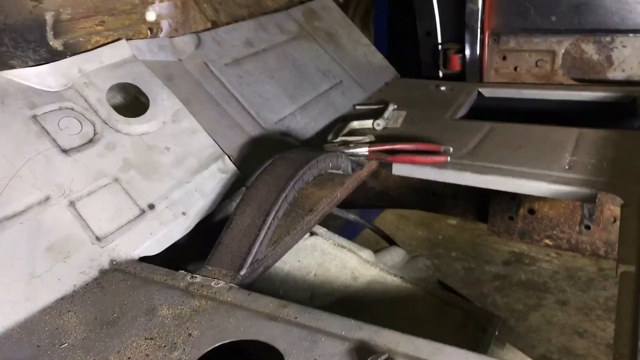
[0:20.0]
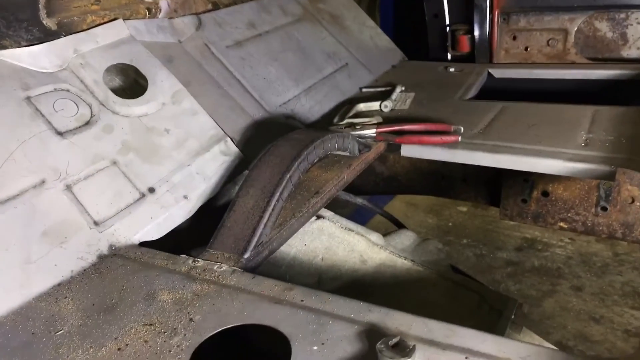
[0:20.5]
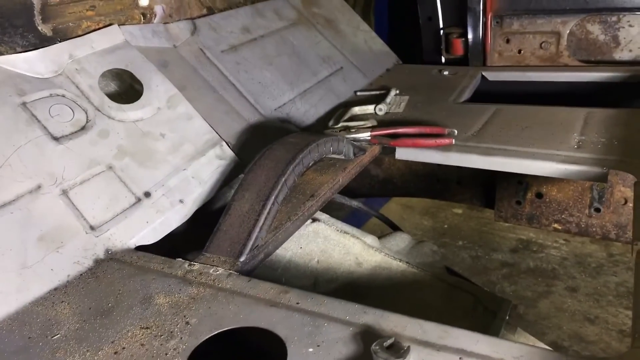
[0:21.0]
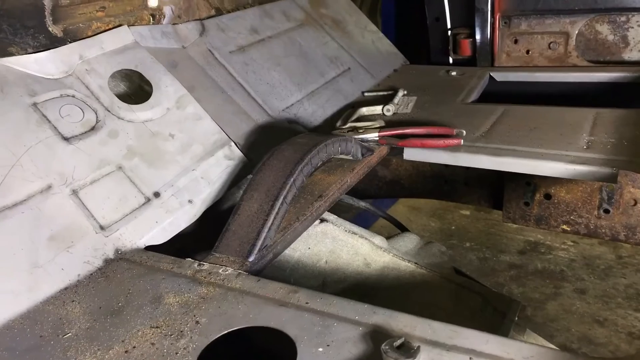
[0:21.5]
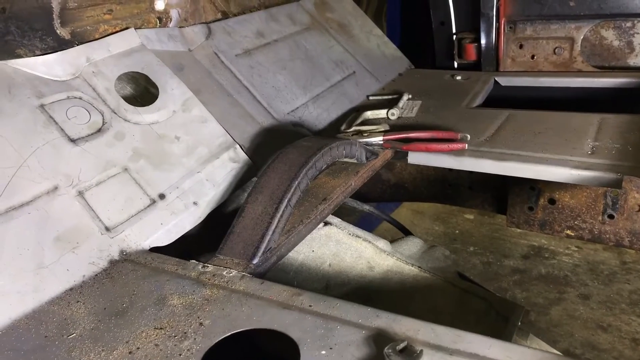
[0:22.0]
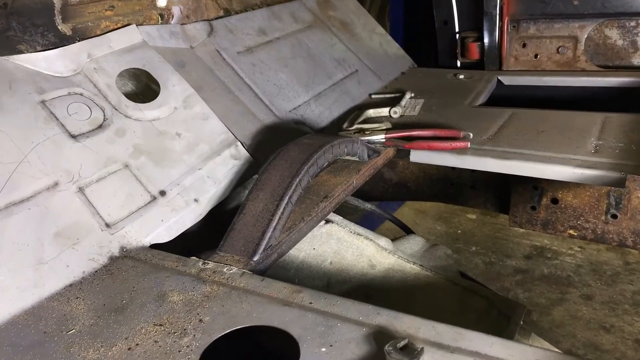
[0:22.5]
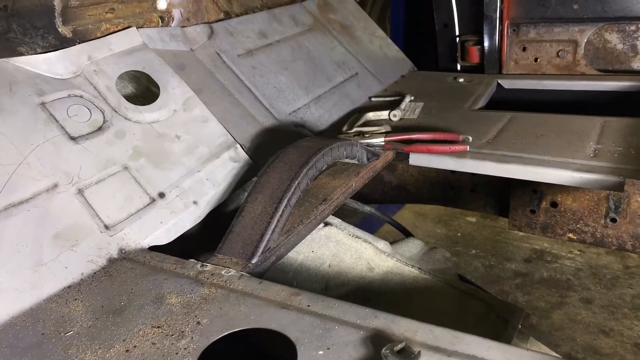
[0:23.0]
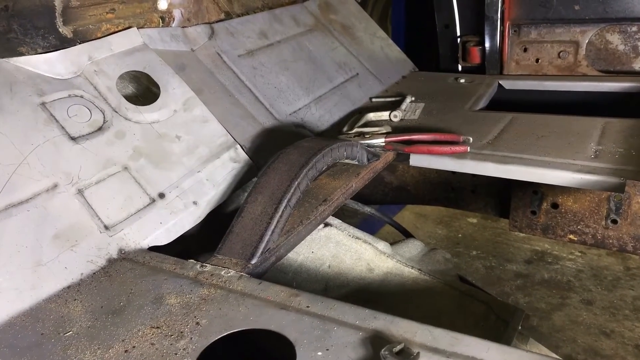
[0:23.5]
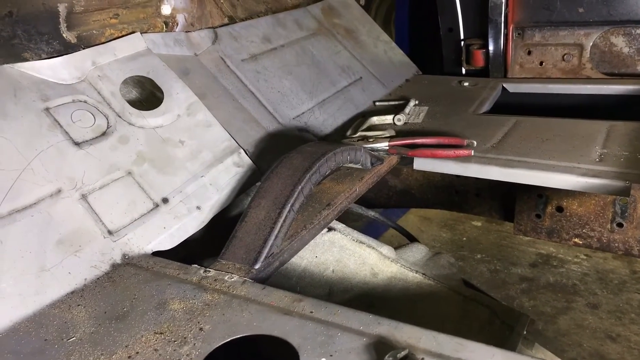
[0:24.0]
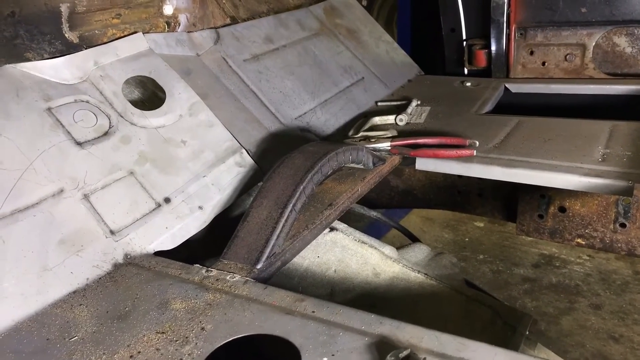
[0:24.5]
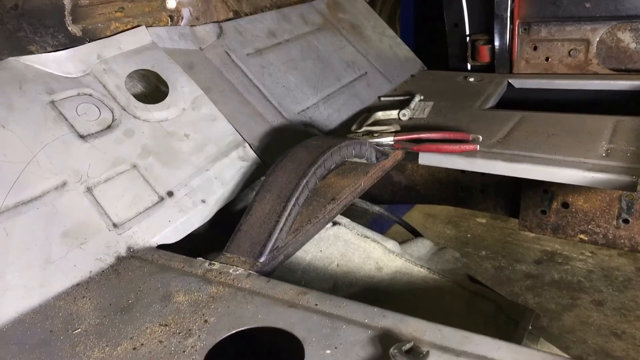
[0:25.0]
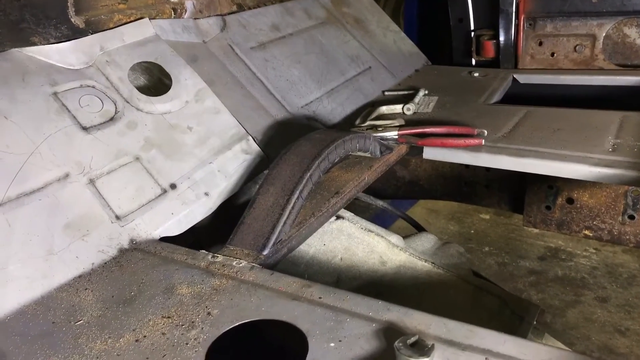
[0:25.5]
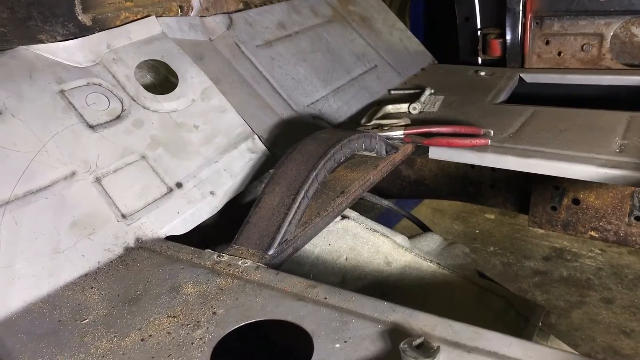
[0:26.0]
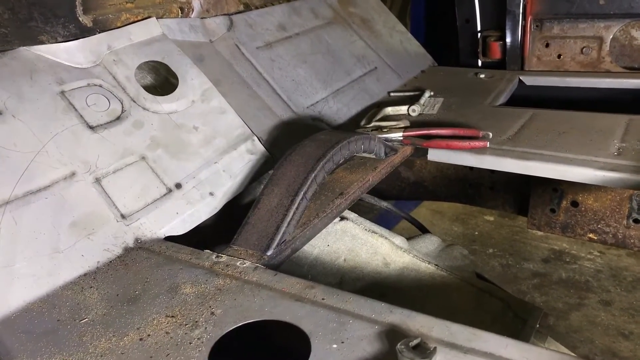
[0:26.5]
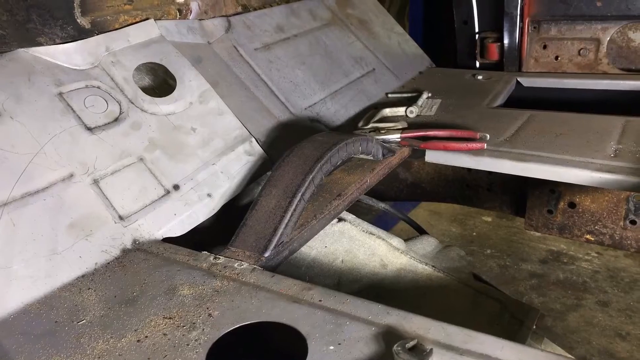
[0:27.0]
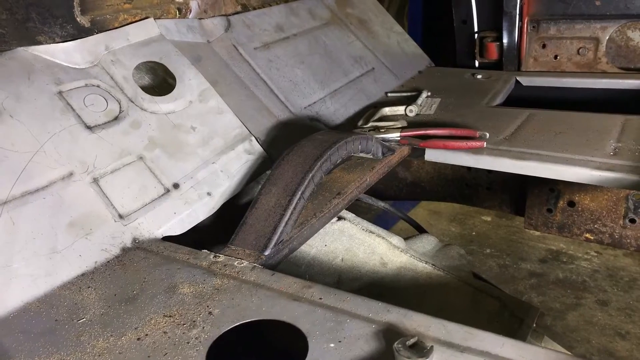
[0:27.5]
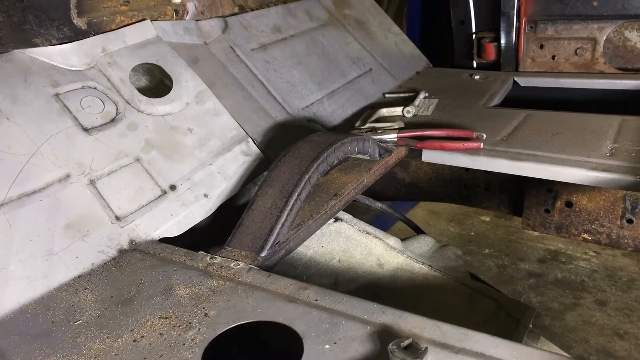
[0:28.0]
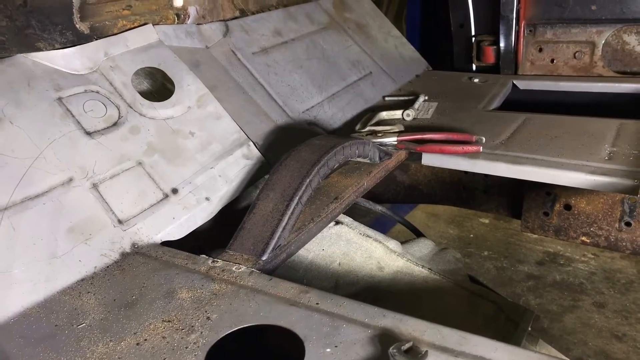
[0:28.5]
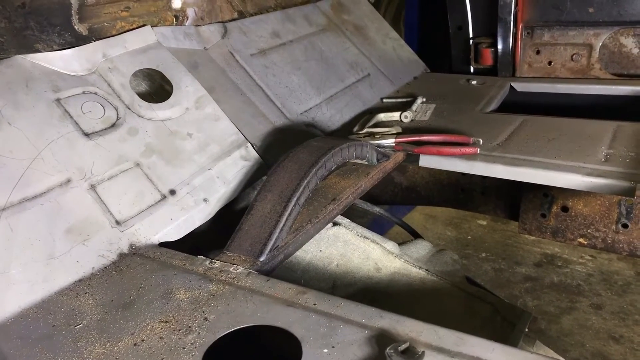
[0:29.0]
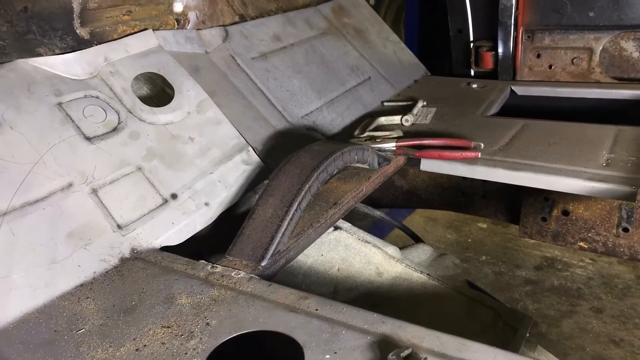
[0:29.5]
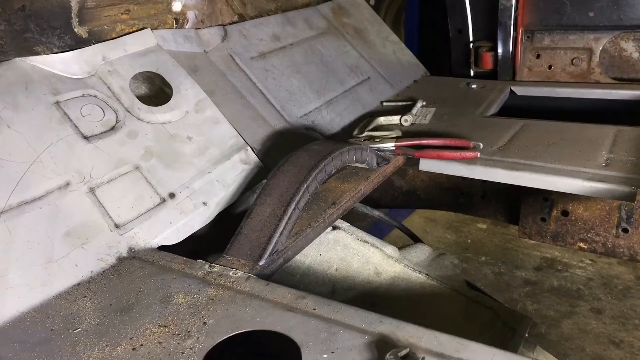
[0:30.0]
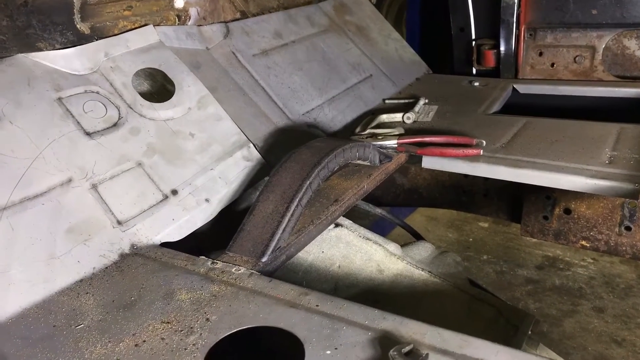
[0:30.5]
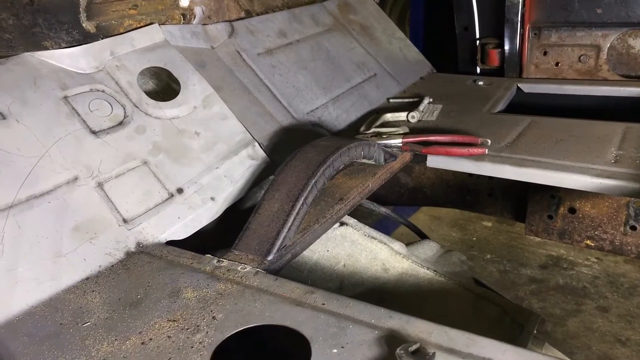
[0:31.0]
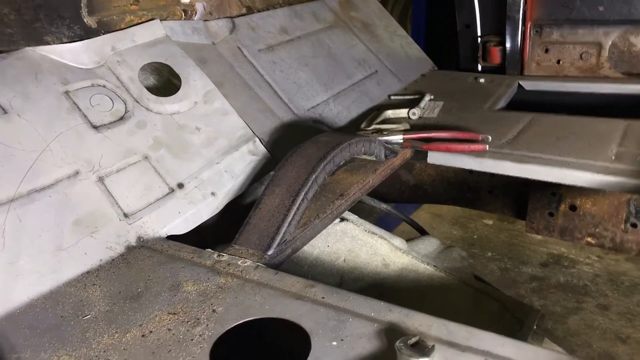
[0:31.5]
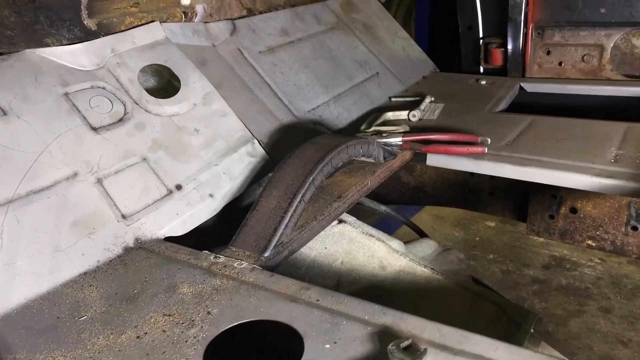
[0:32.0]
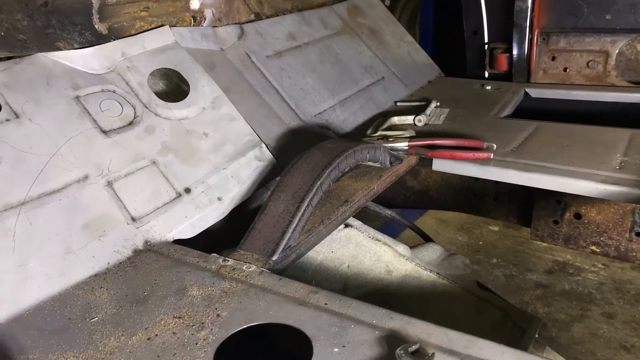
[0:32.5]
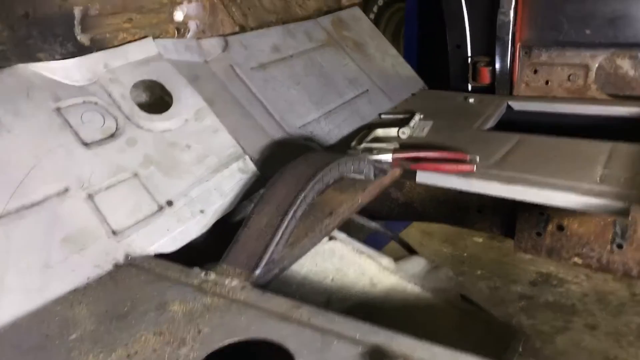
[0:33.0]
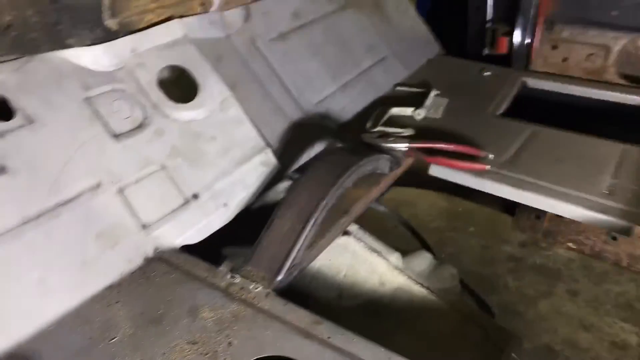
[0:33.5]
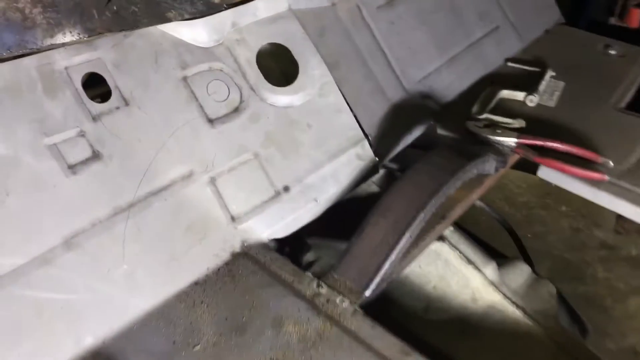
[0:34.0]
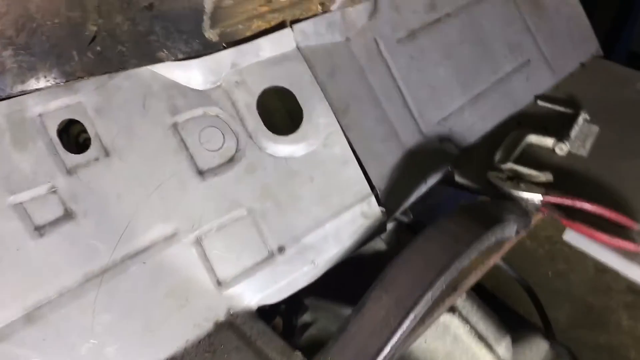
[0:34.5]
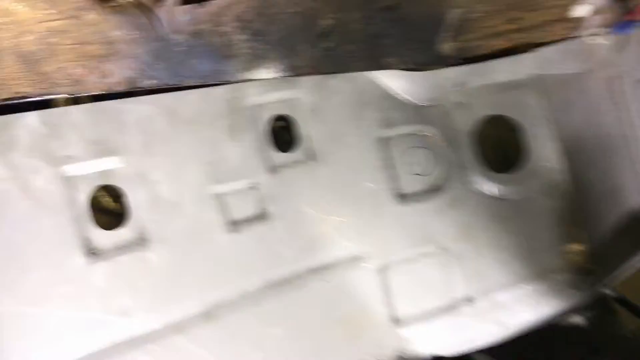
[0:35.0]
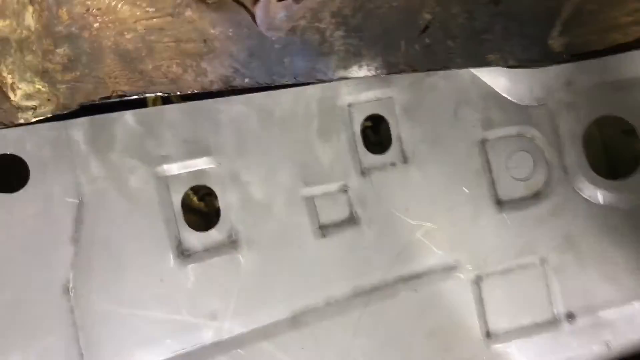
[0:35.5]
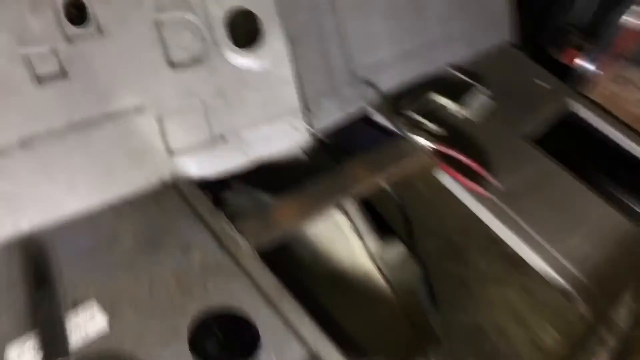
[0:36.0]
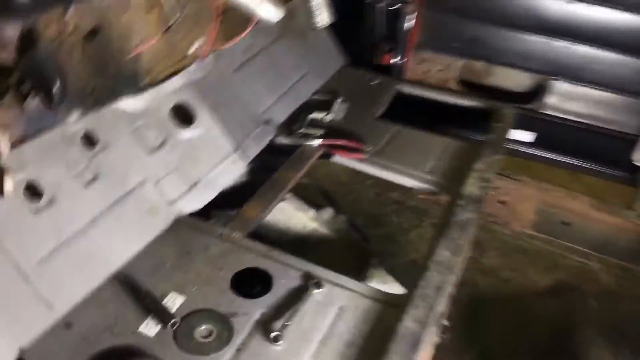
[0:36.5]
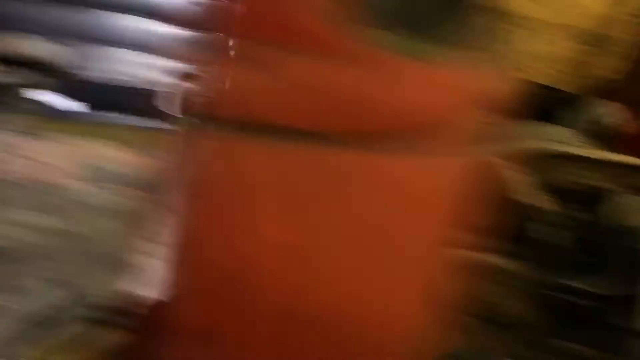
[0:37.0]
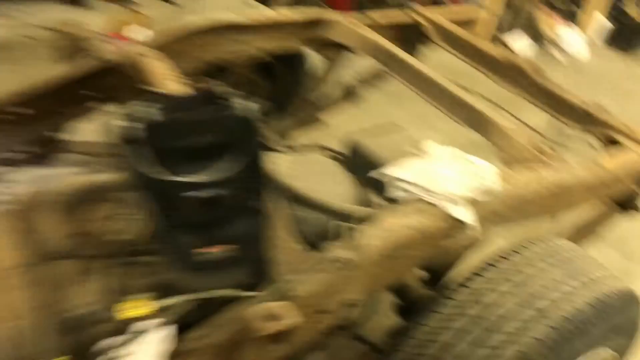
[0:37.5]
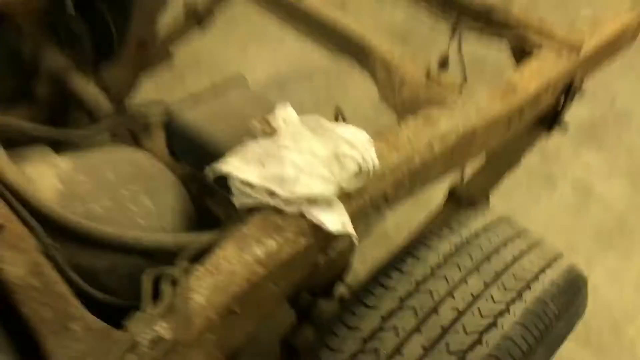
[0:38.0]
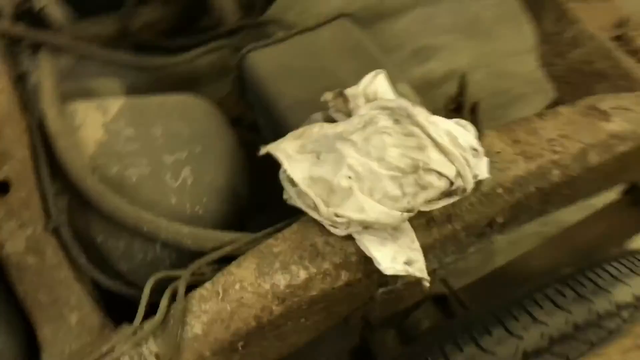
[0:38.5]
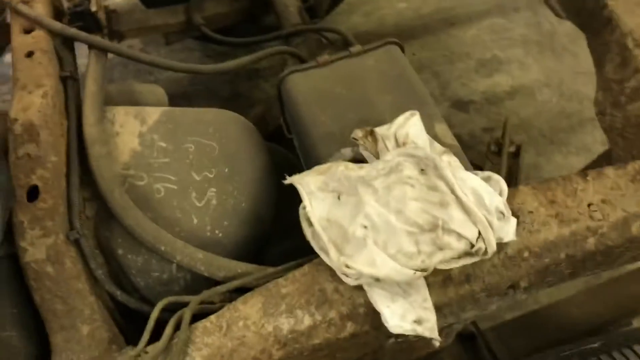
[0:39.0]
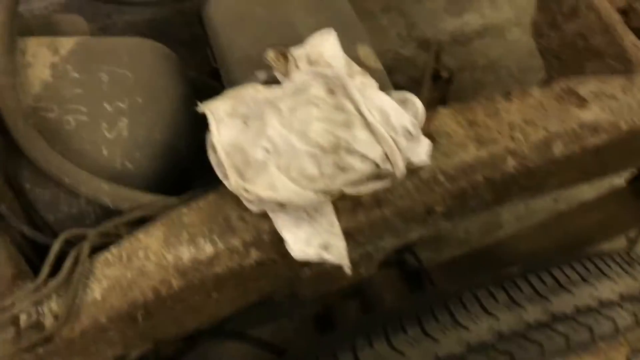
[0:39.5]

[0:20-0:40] Someone records a vehicle that has been torn down and apart. The shot starts on a close-up of a floorboard area, possibly the under-dash area. Some of the pieces at the bottom look like they have possibly been replaced and appear to be in better condition than the under-dash area. A few tools sit around on the floorboard, including a wrench with red handles and three to five others. The view stays zoomed in on the floorboard area, then zooms out as the person walks farther back, recording that area and zooming in on it; this is apparently a torn-down truck, with the camera moving back to the truck bed area. There are no identifying features, and the vehicle looks like it was red at one time. Another tire becomes visible, and the camera sort of zooms in on what looks like an old white rag.